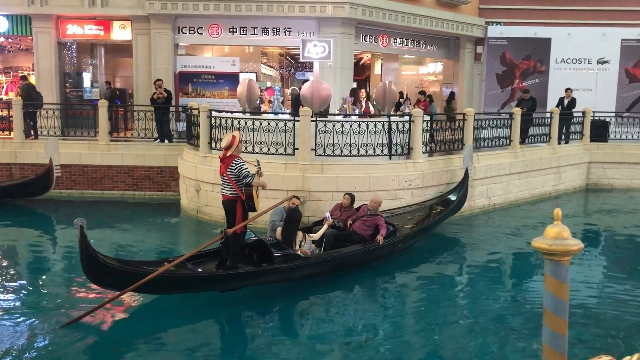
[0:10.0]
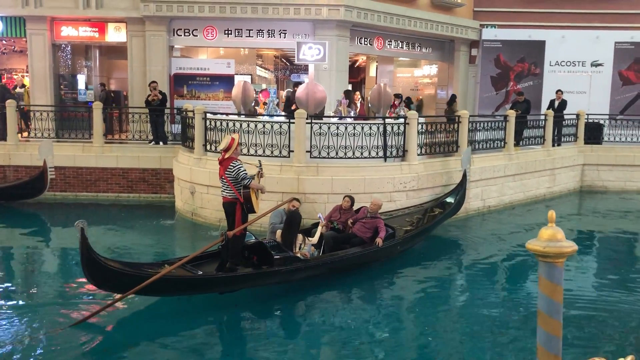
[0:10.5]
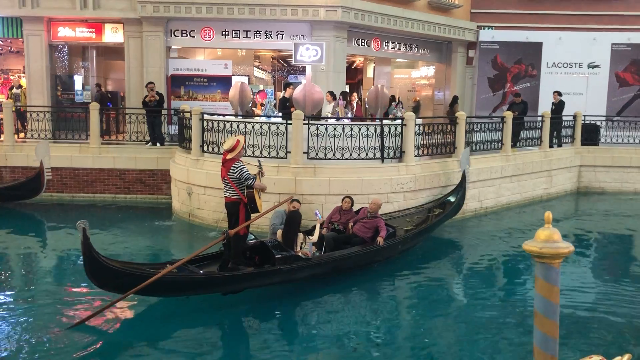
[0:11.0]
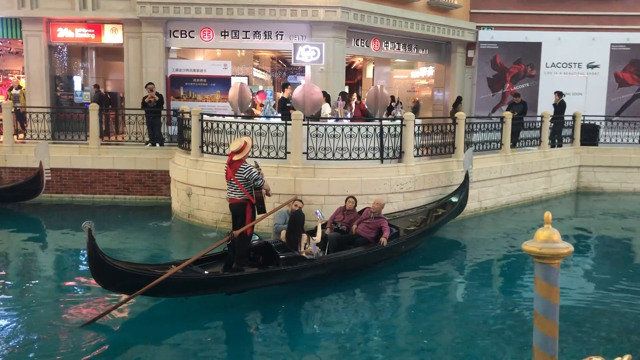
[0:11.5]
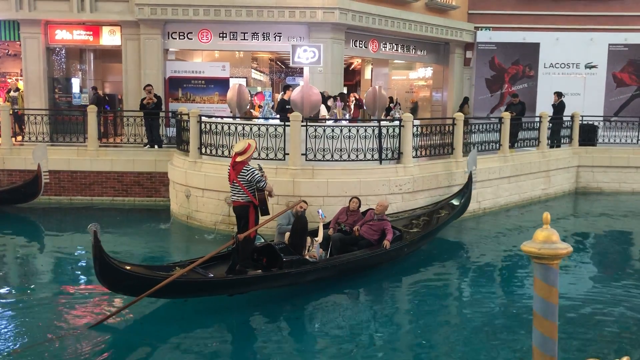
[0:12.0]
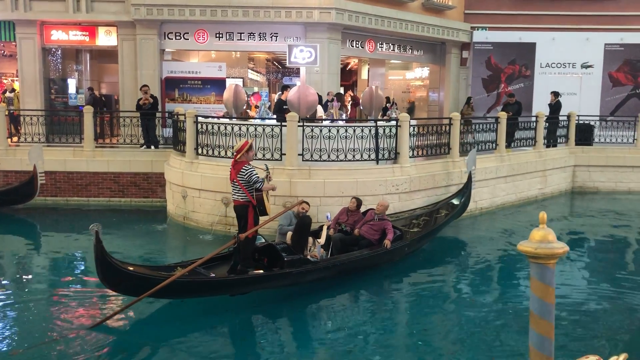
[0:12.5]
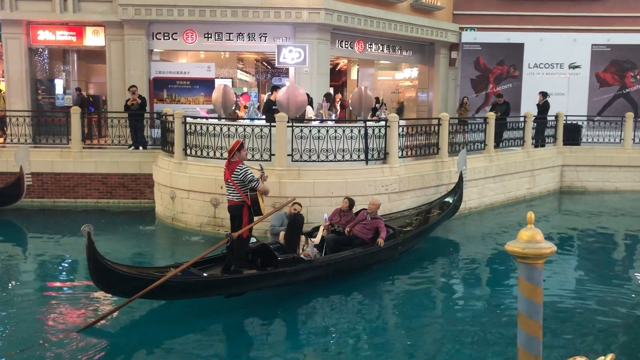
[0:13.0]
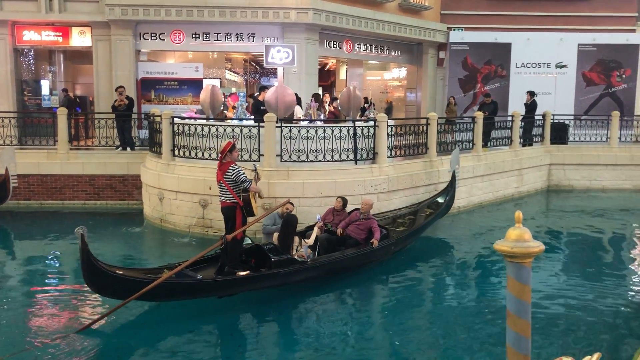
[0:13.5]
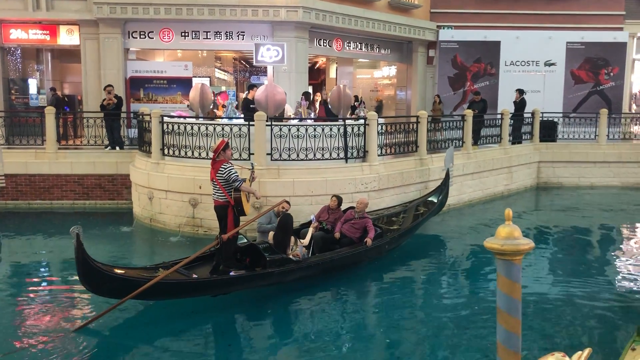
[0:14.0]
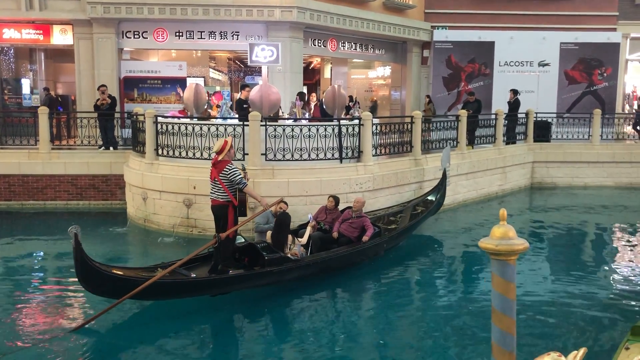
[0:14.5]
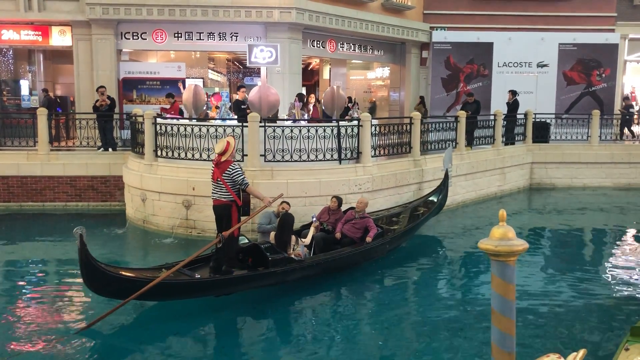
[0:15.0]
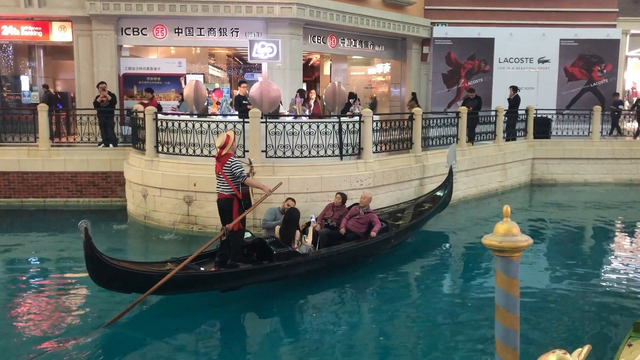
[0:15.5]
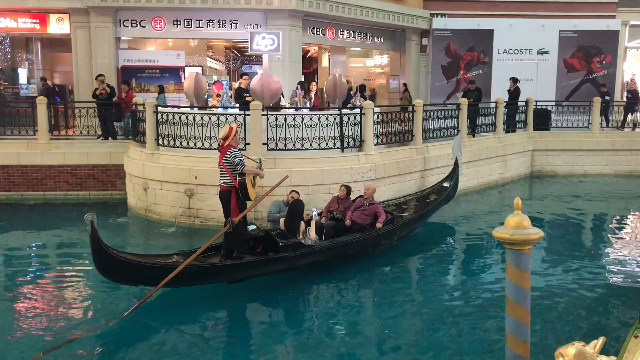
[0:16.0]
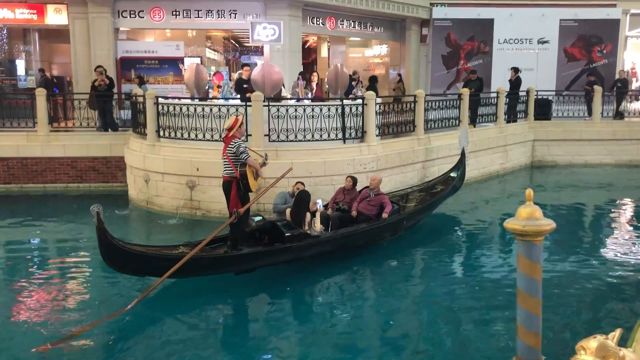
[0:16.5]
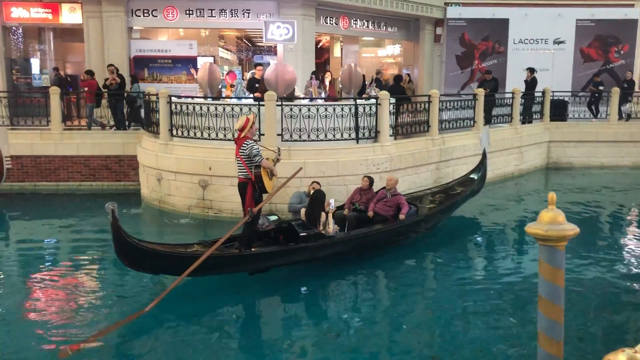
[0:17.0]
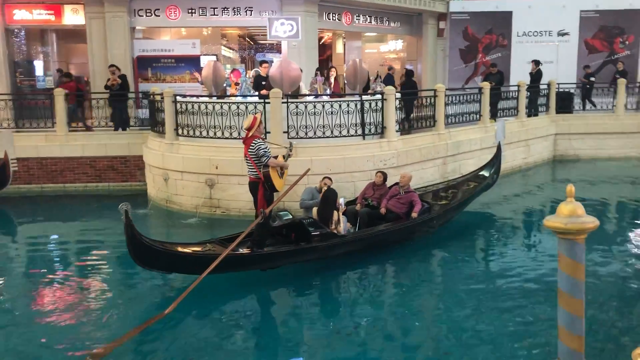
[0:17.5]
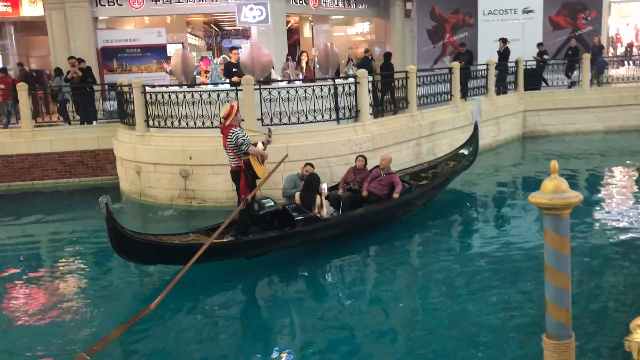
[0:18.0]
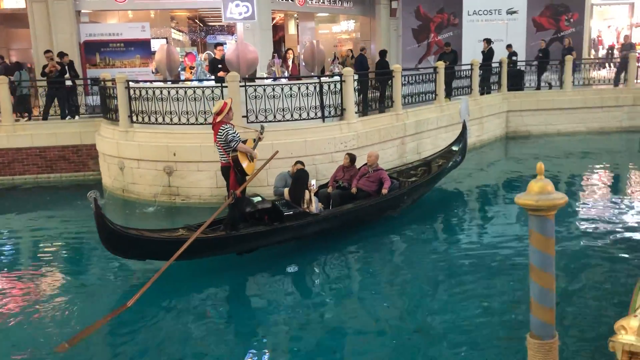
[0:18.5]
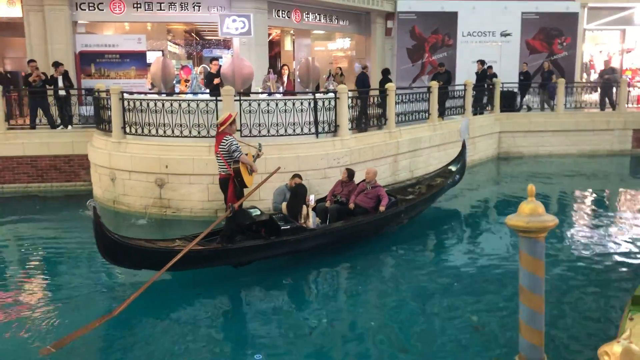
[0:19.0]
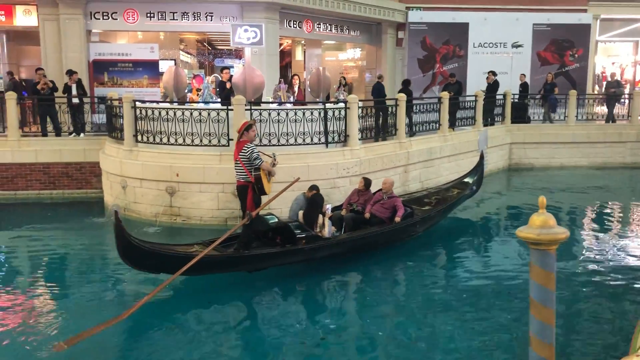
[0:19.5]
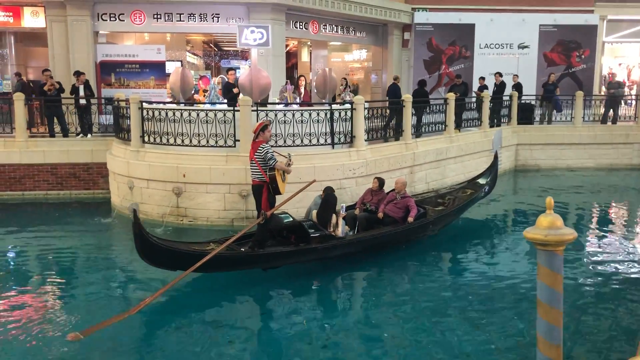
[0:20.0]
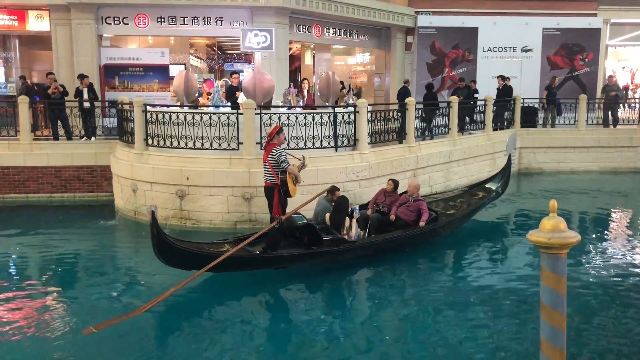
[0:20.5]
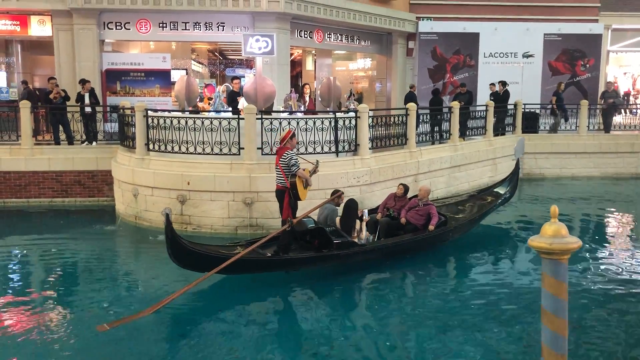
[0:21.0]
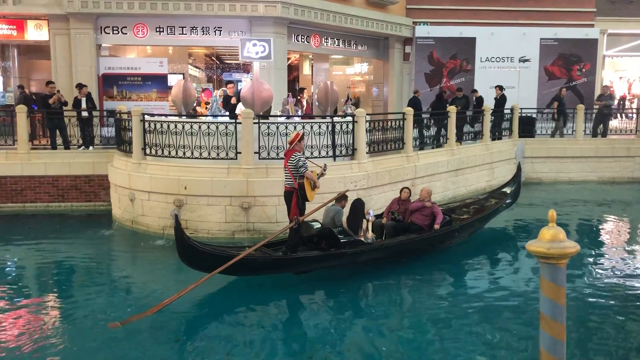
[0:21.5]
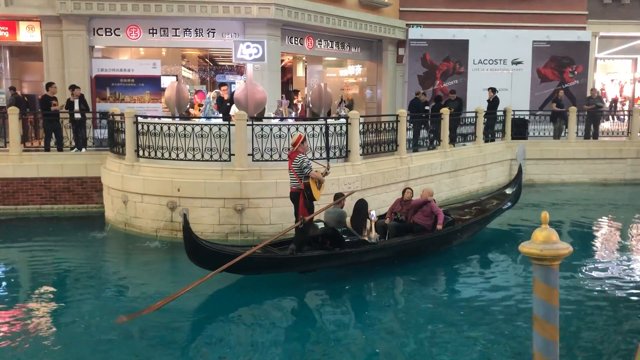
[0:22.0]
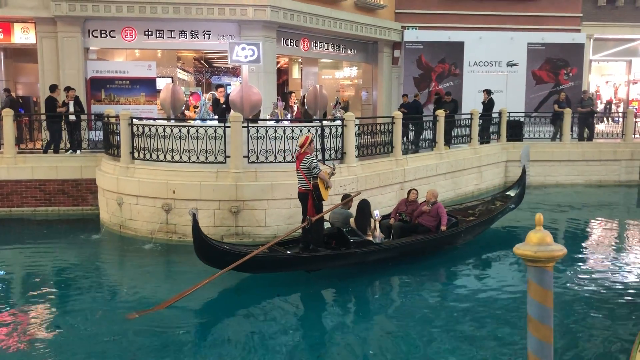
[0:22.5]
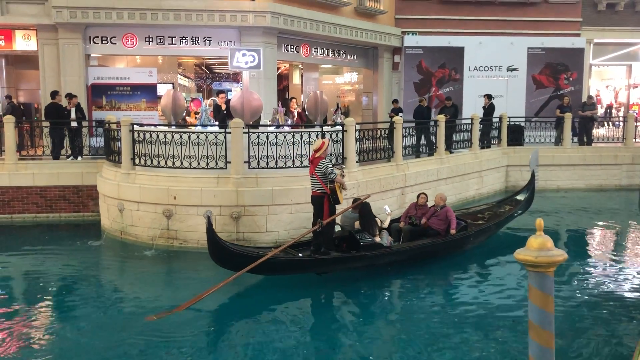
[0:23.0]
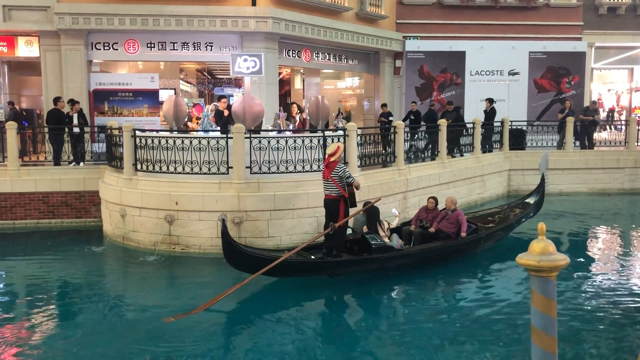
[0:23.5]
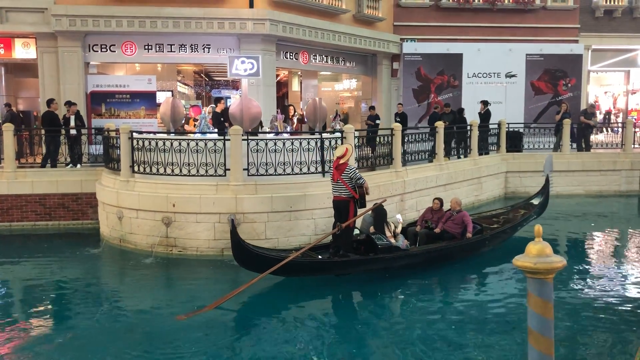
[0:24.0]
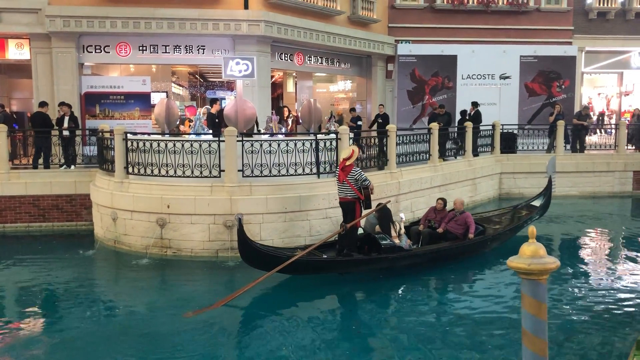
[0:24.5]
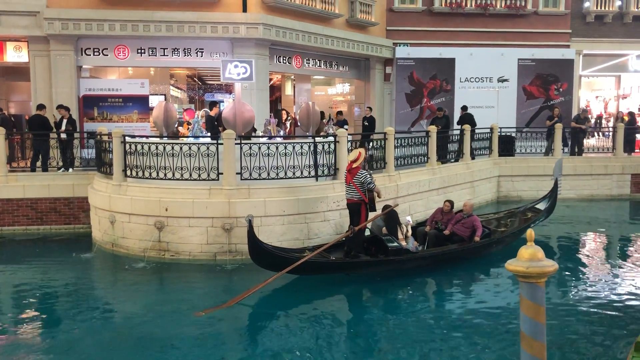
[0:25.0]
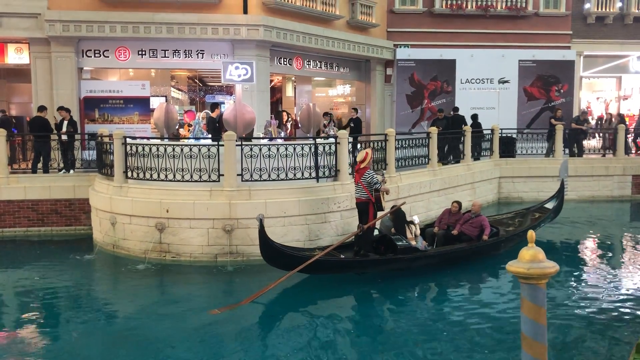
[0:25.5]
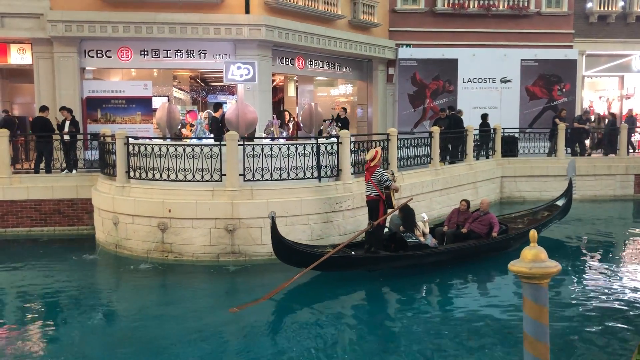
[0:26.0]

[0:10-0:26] The gondola begins to move toward the right. The gondolier is still playing his guitar and uses the pole only every so often, touching it once. Shops remain in the background, including an ICBC shop and a Lacoste shop, with several people wandering along shopping. As the gondola proceeds to the right, a golden-topped pole appears in the foreground with a golden striped, candy-cane-effect support; it seems to be on the bank from which the video is taken. Somebody on the shopping promenade takes a photograph of the gondola as it moves off. On board, a man and a woman sit facing the camera, both wearing pale purple tops; at one point the man reaches with his right hand to scratch his left shoulder. A younger couple mainly have their backs to the camera; the woman has long dark hair and uses a white phone some of the time.